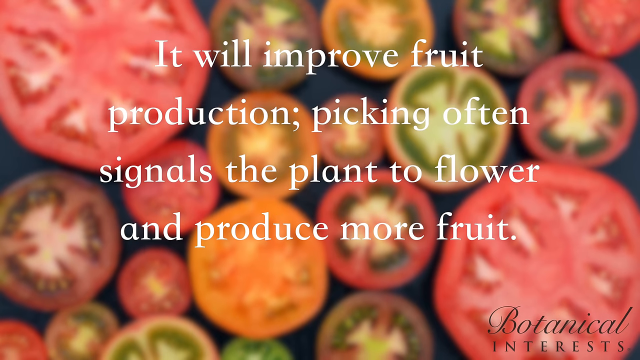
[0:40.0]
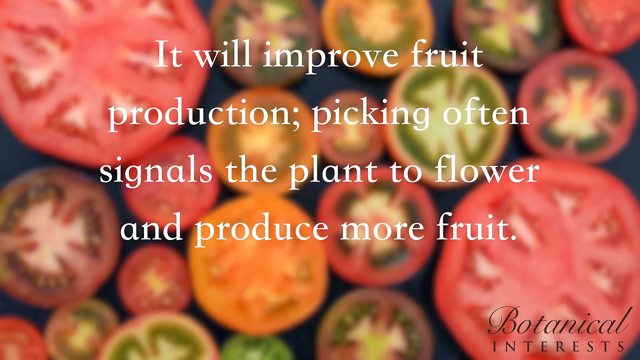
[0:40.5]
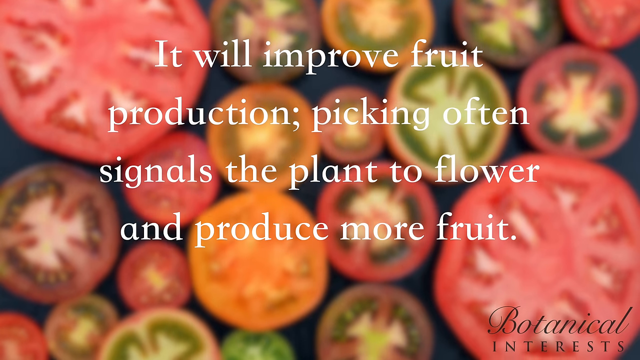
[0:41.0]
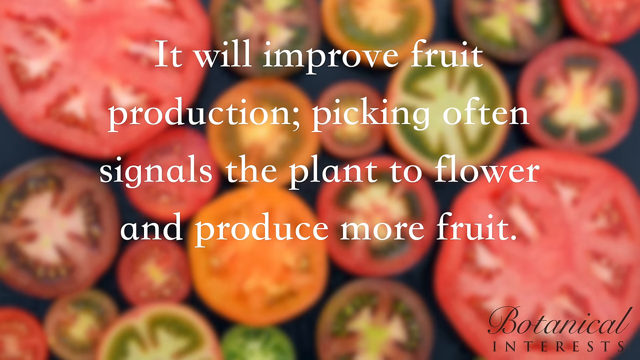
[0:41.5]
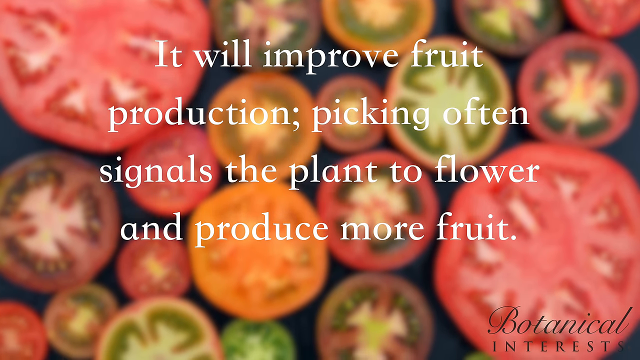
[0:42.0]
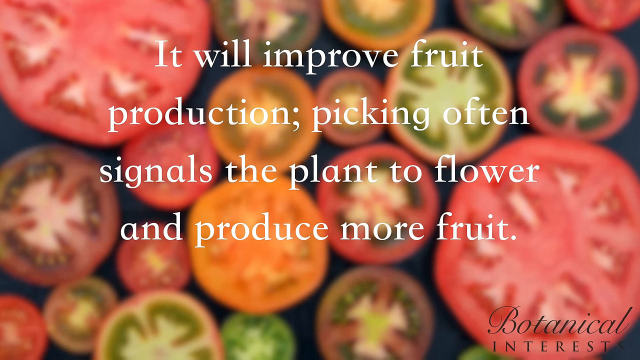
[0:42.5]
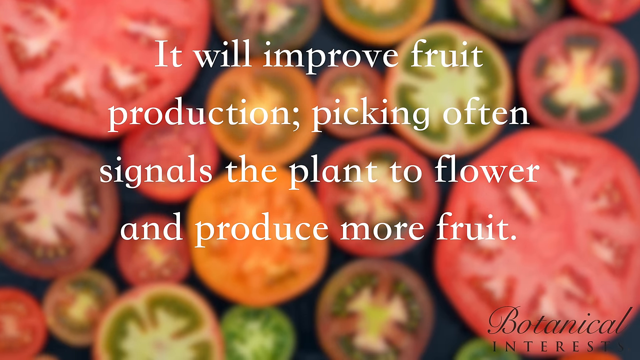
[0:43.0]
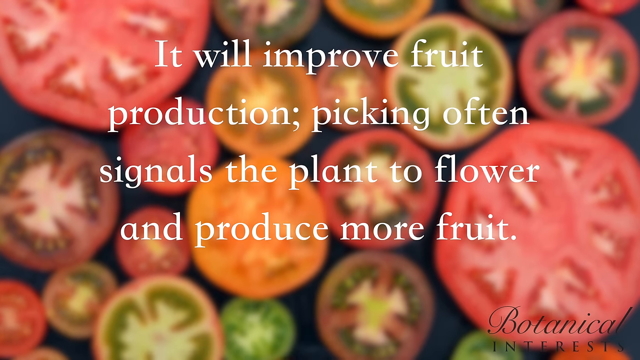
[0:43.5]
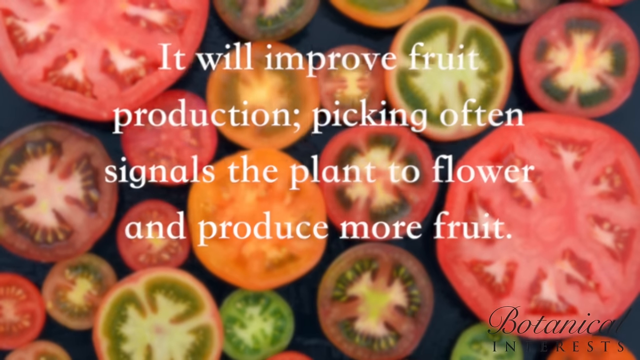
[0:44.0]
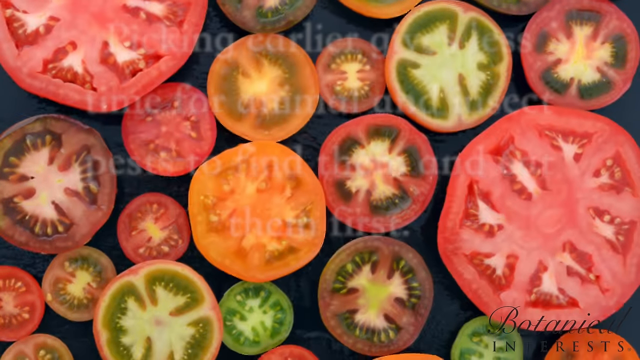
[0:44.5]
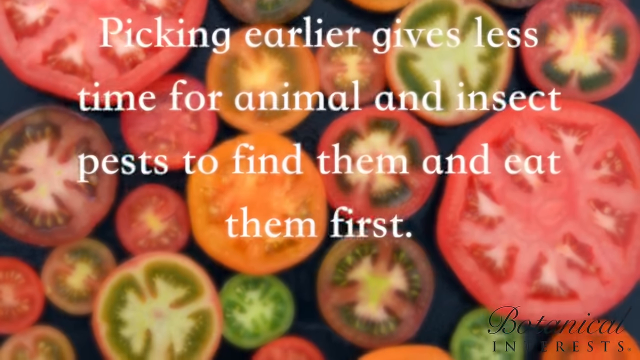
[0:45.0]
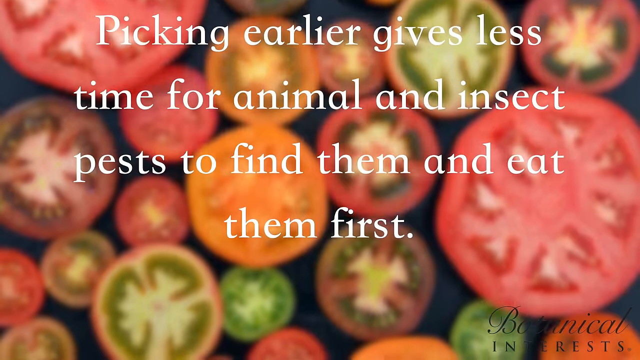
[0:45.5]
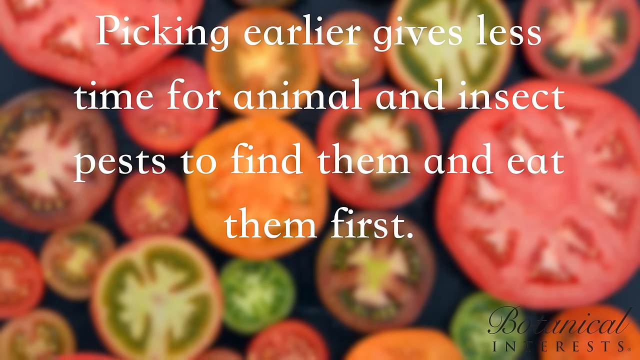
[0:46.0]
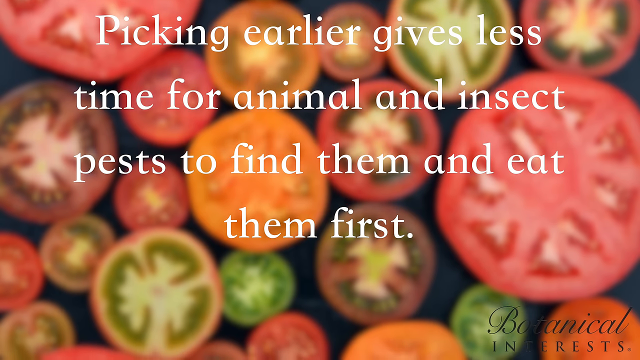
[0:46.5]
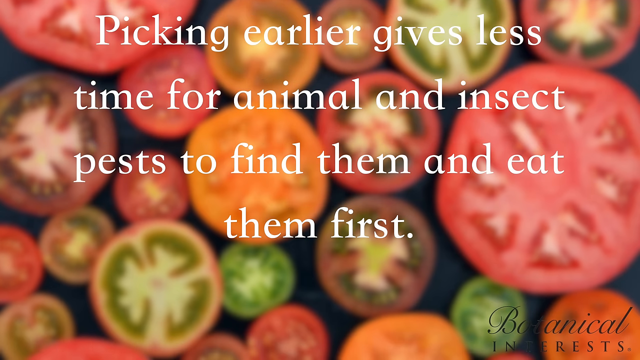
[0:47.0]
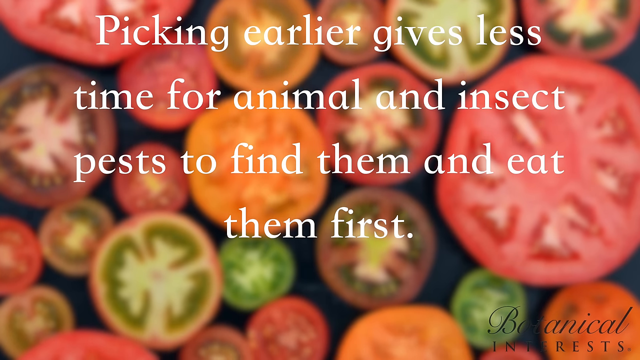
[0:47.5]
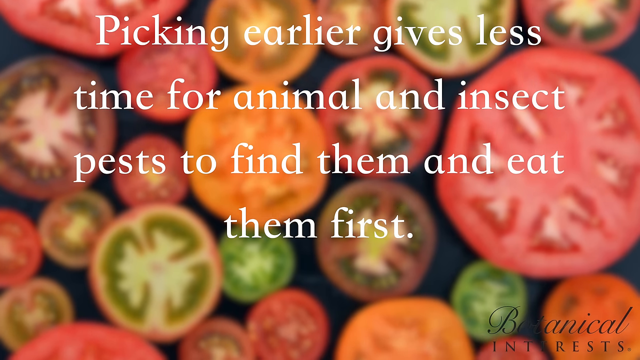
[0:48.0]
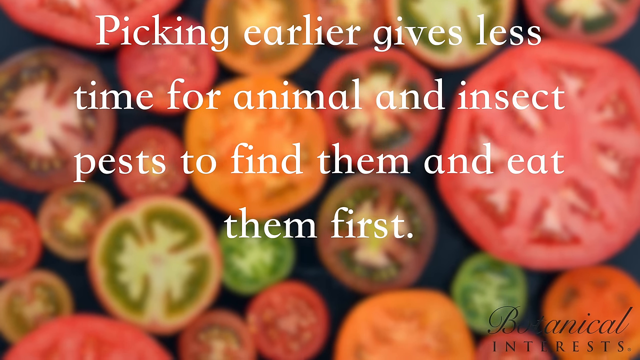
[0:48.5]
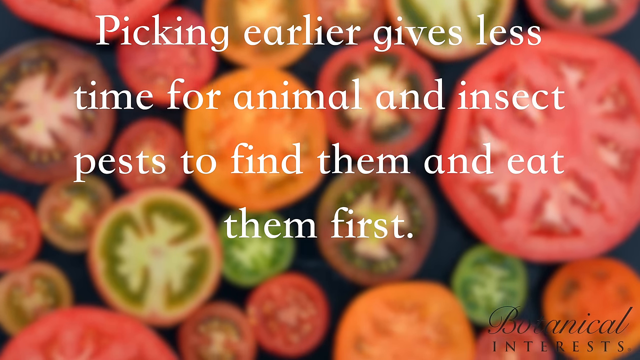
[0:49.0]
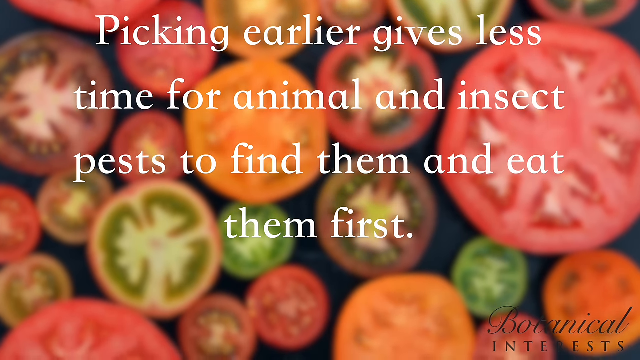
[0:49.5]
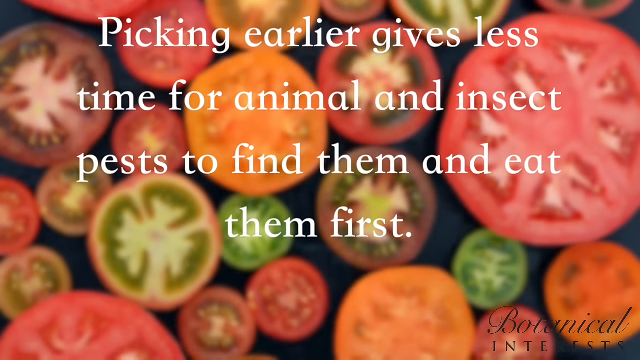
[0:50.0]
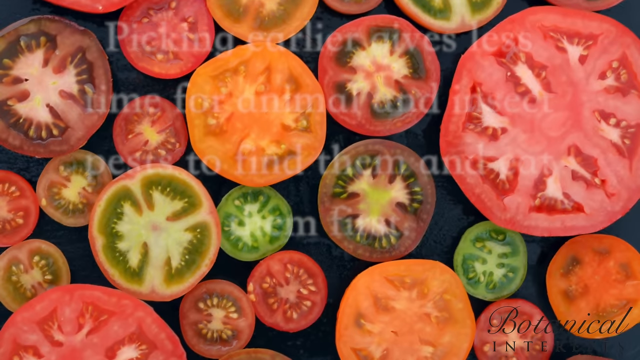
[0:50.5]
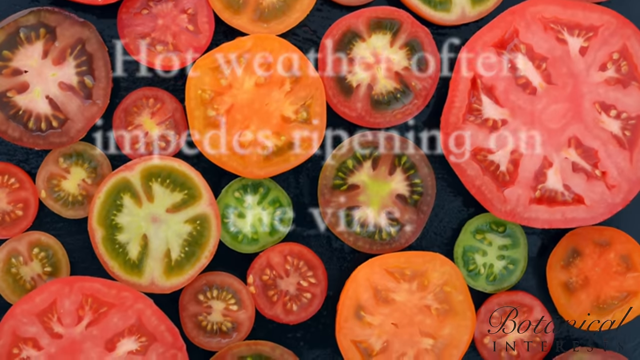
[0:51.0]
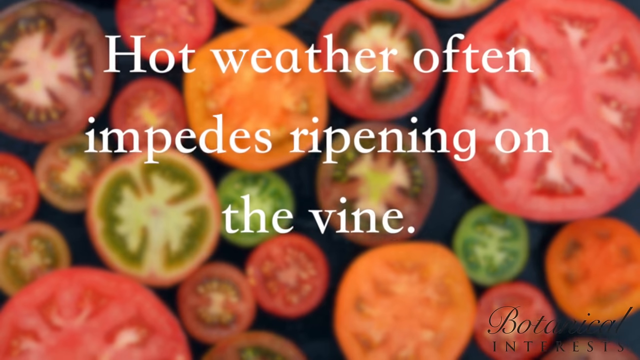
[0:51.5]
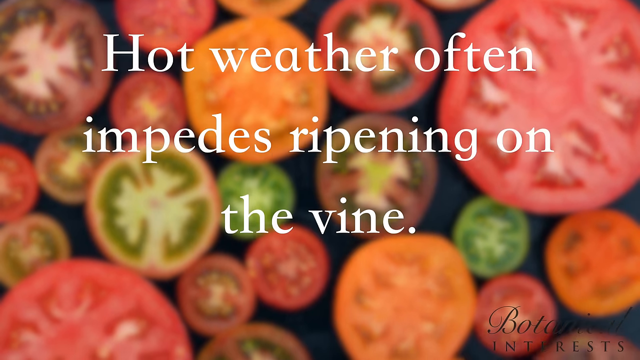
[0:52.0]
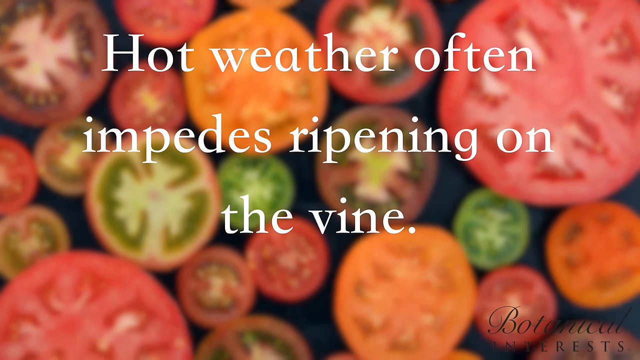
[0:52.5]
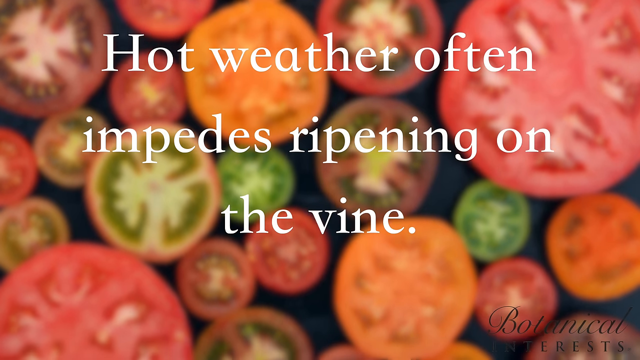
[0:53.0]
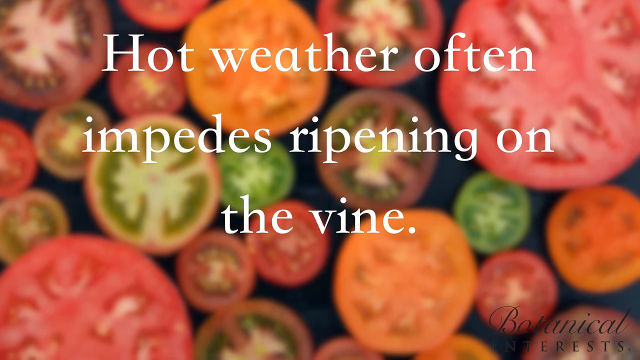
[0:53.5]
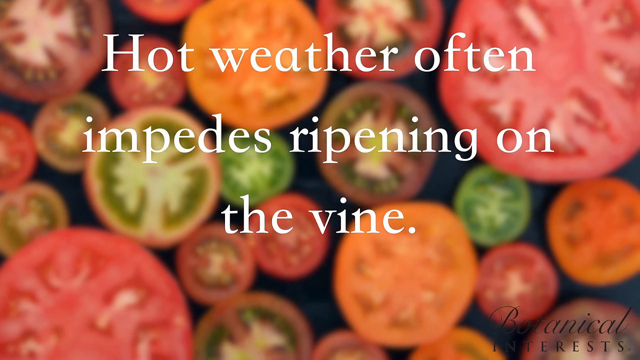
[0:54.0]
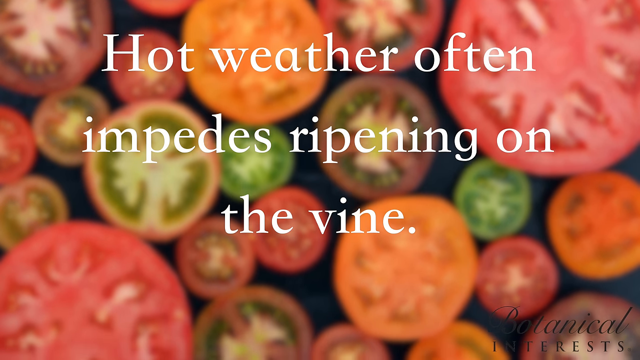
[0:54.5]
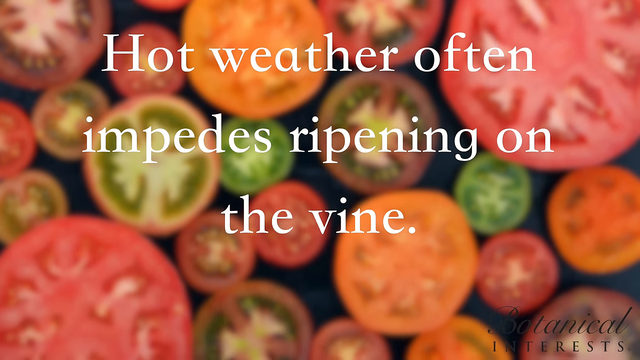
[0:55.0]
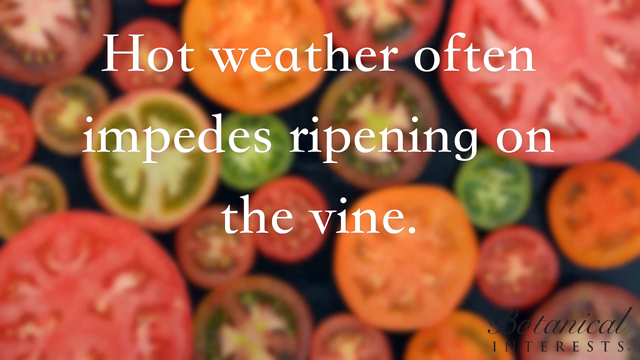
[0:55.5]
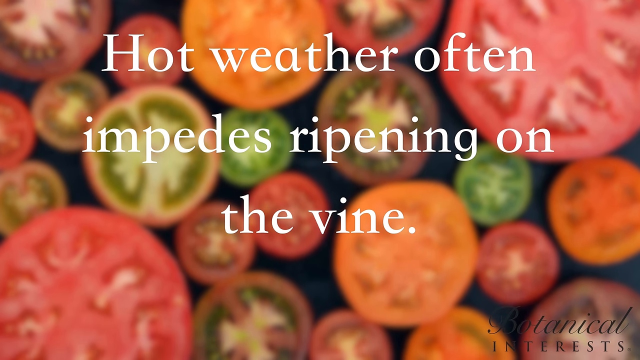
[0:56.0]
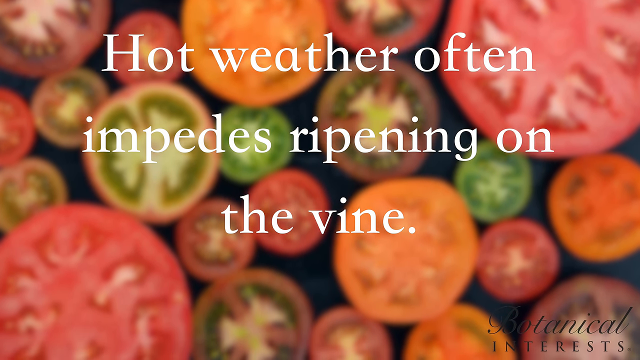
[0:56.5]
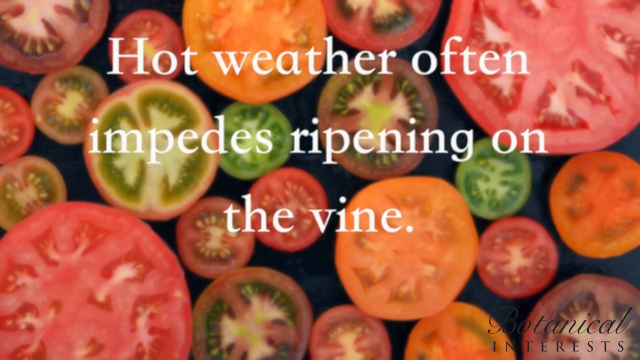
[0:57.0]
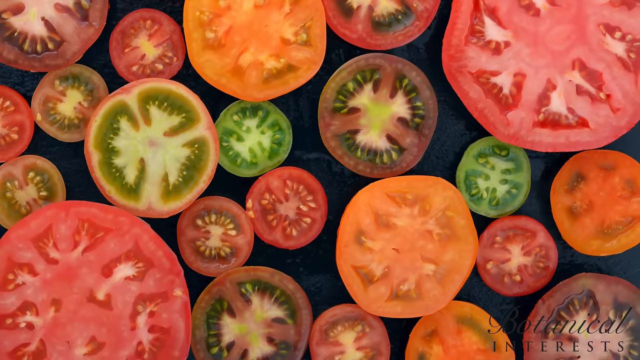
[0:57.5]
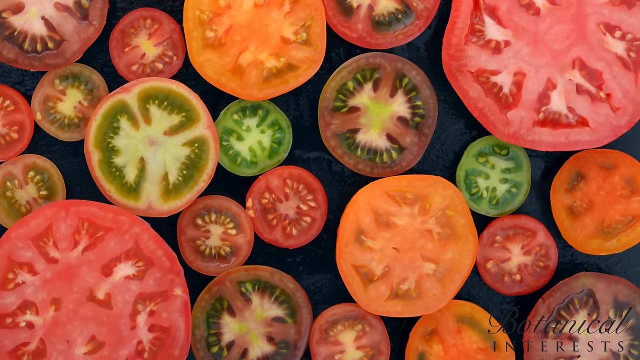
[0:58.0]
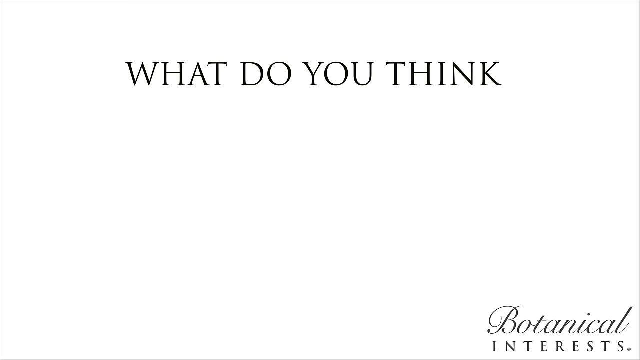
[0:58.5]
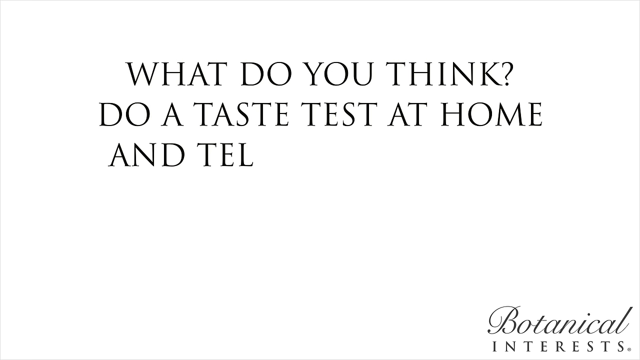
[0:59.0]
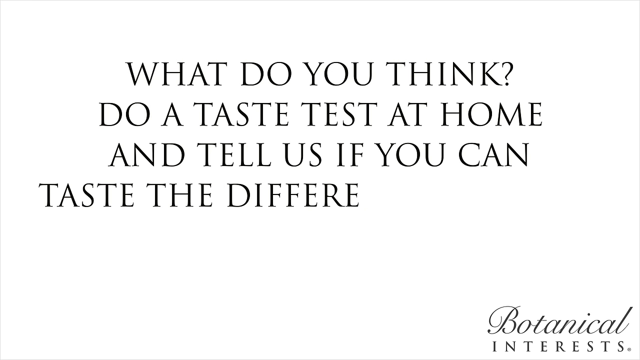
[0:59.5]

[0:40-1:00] A digital image shows a background of a variety of different types of tomato that have been cut in the middle and laid out so that the inside of each tomato is visible. They range in size from big beef tomatoes to tiny cherry tomatoes and those in between, and in colour from greens to reds and oranges. The insides of some of the tomatoes look like tiny primrose flowers. Overlaid on the image is white text reading "it will improve fruit production, picking often signals the plant to flower and produce more fruit". The background image moves slightly, almost in a scrolling motion, and the text changes to read "Picking earlier gives less time for animal and insect pests to find them and eat them first". The text changes again to read "Hot weather often impedes ripening on the vine."